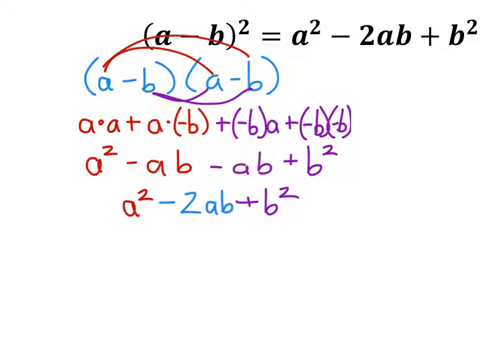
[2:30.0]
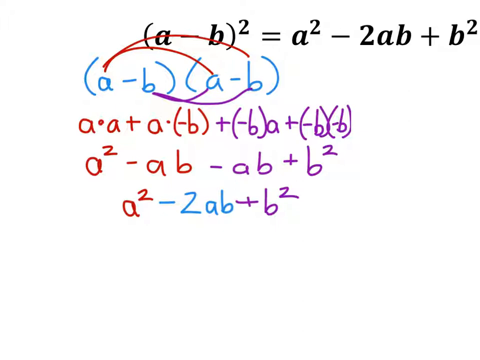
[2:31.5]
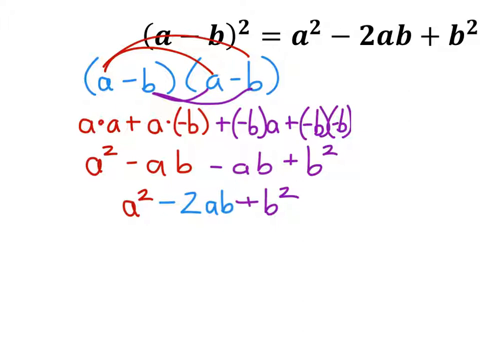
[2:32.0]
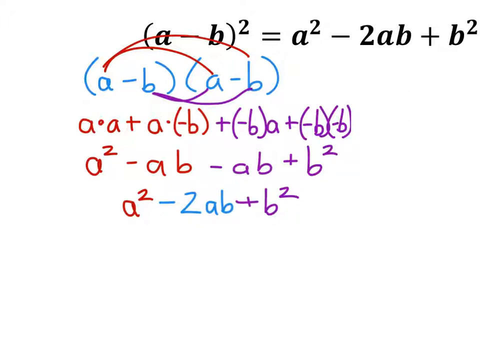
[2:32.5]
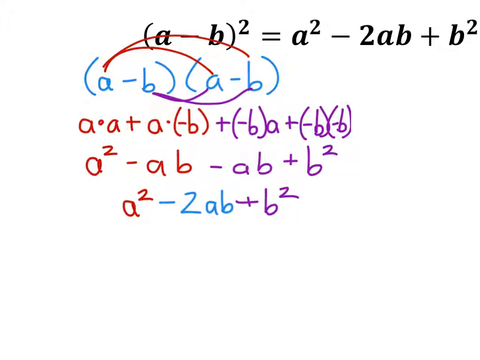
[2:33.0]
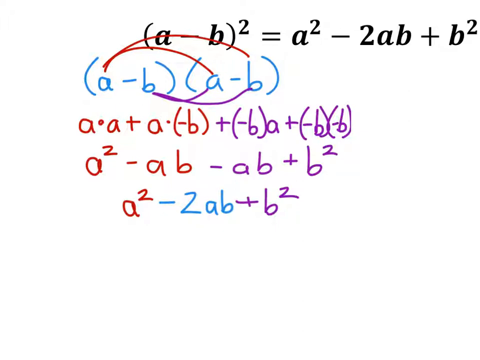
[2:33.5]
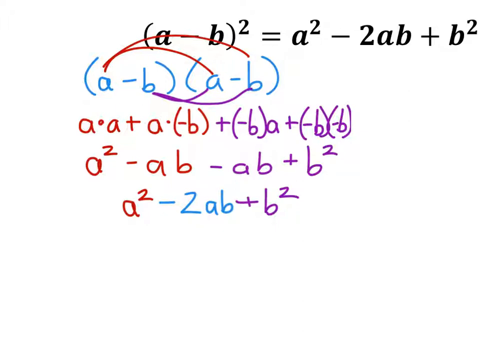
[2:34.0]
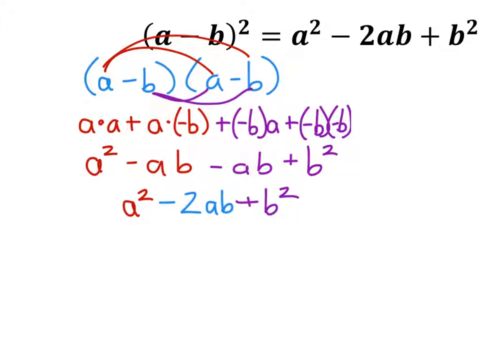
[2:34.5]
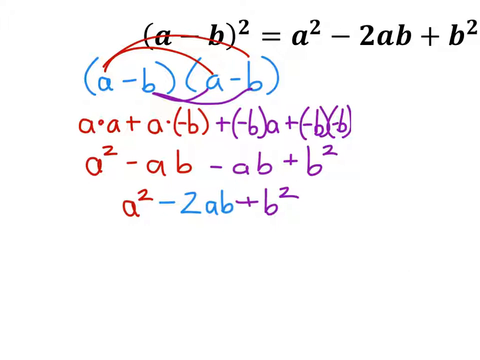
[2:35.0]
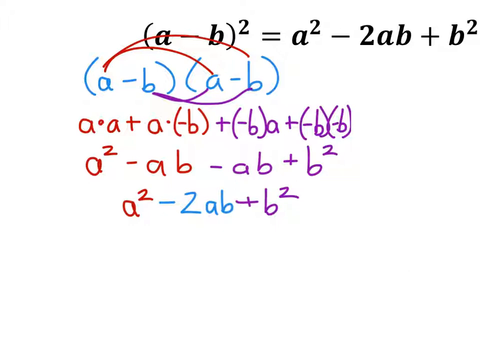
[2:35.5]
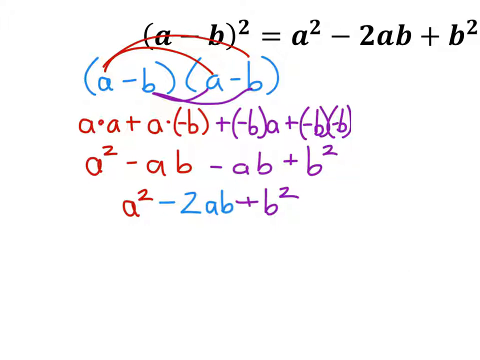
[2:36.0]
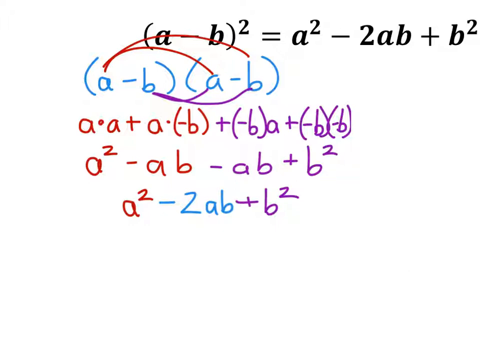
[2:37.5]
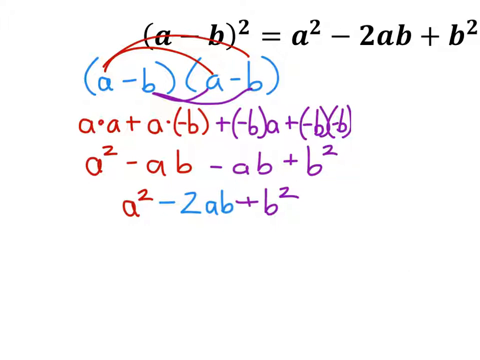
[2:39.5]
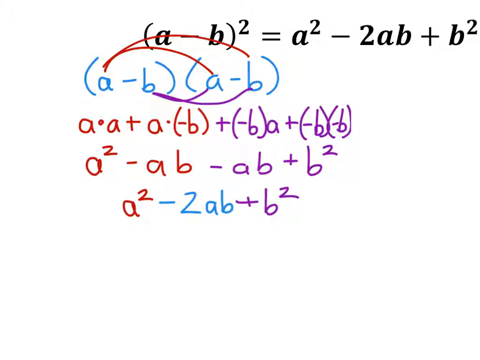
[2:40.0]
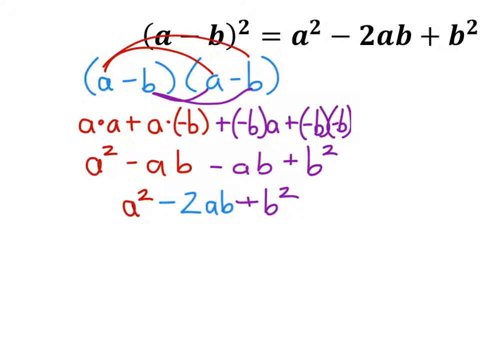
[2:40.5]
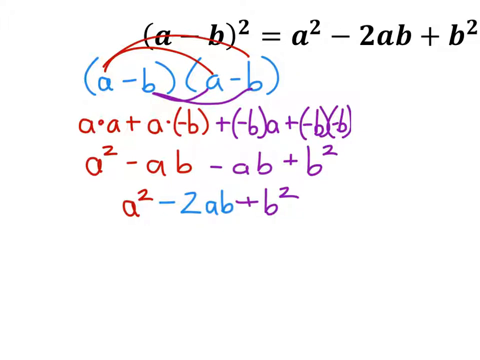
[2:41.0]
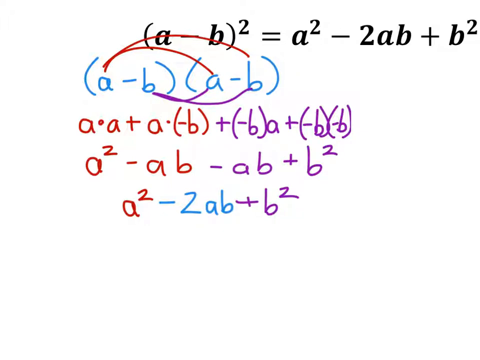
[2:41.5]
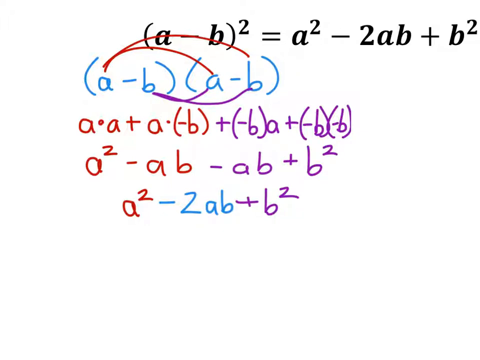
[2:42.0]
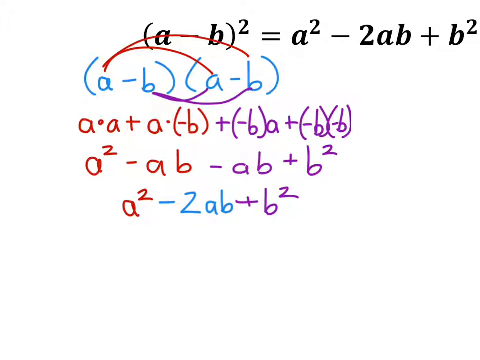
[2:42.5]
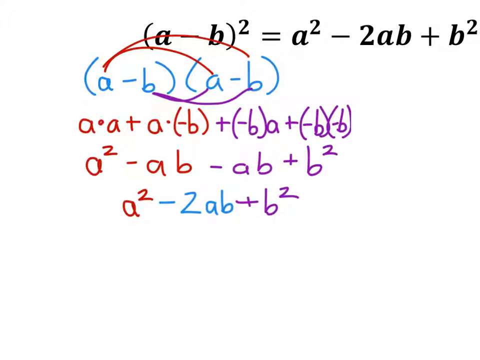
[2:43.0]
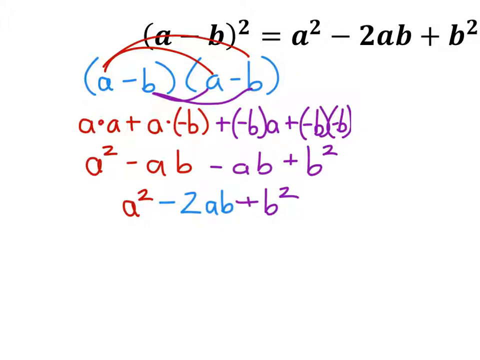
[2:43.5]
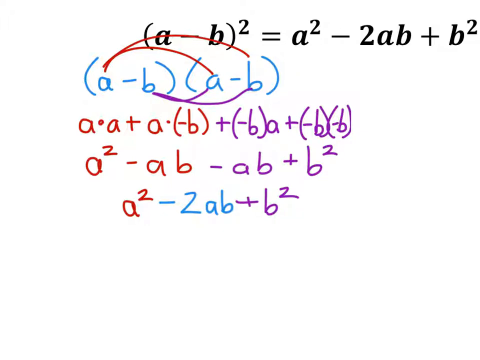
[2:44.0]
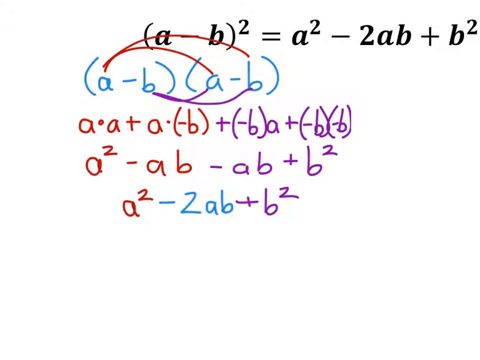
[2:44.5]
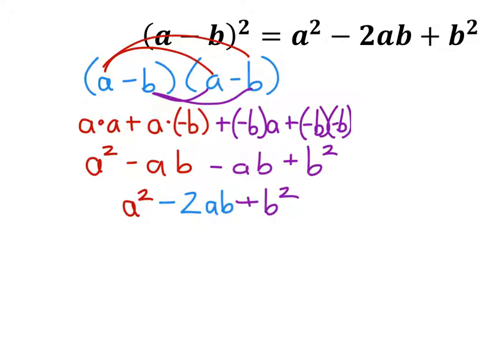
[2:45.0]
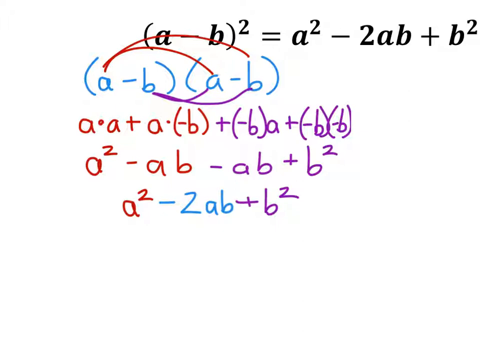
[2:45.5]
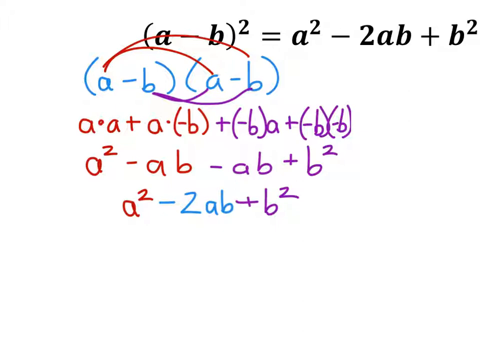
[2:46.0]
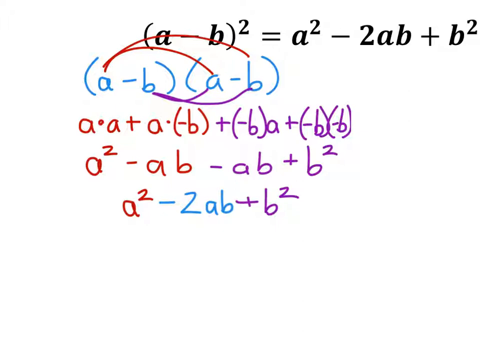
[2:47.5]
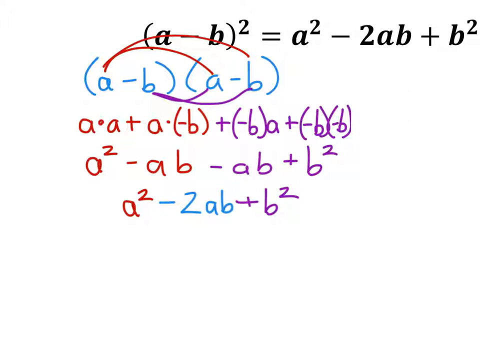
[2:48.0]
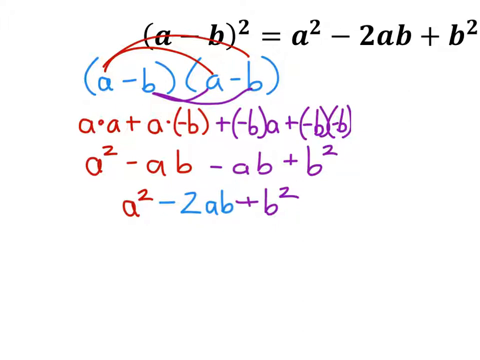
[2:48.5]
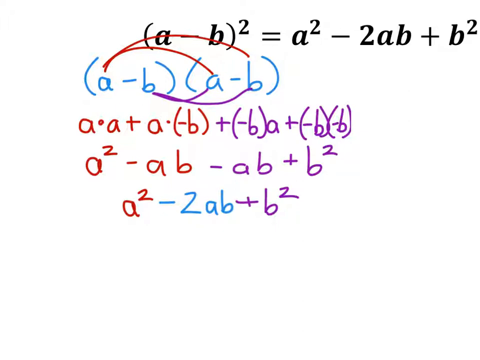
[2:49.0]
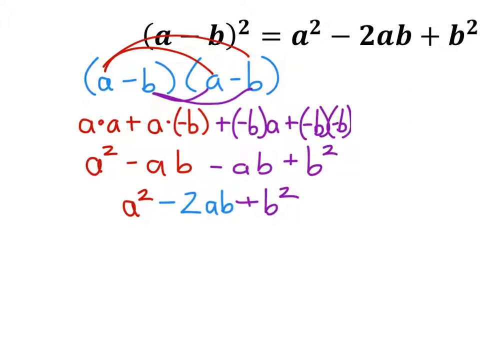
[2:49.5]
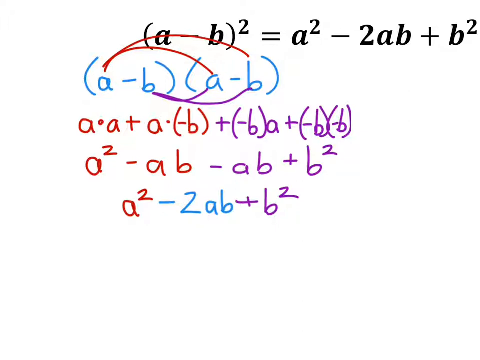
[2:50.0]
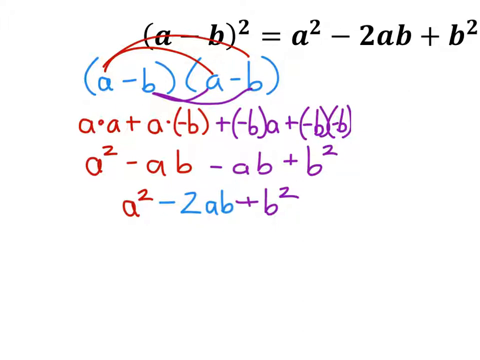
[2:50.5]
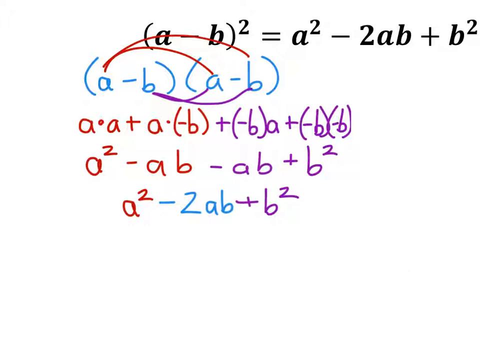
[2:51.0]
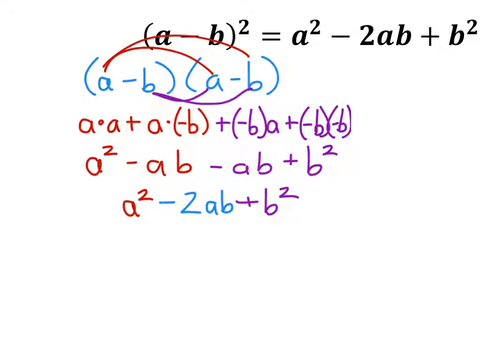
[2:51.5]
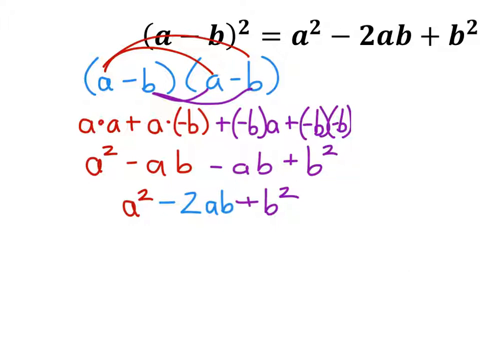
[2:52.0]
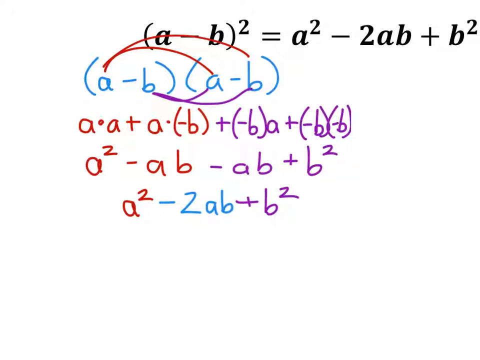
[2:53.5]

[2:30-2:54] Black text on a white background shows (A − B)² = A² − 2AB + B². Under this is (A − B)(A − B), with two lines above it, one sending A into A and the other sending A into B, and two lines under it, one sending B into A and one sending B into B. Below is A × A + A × (−B) + (−B) × A + (−B) × (−B), then A² − A × B − A × B + B², and under that A² − 2 × A × B + B².